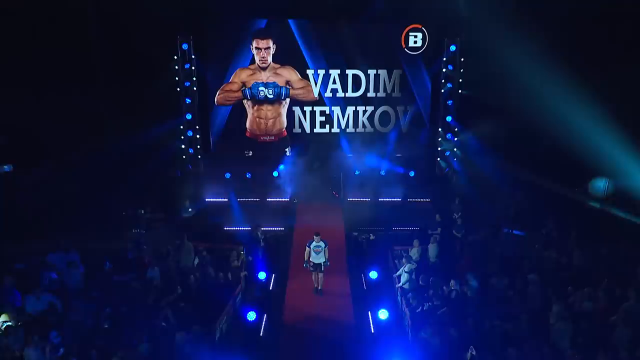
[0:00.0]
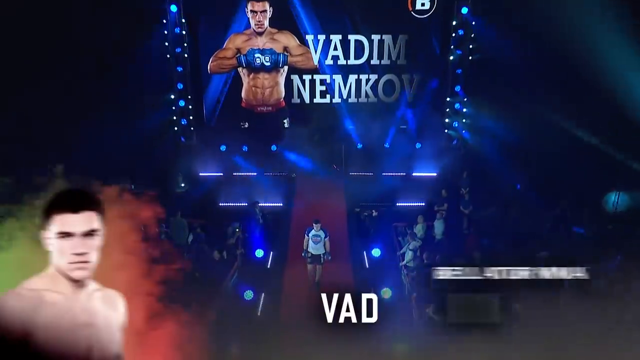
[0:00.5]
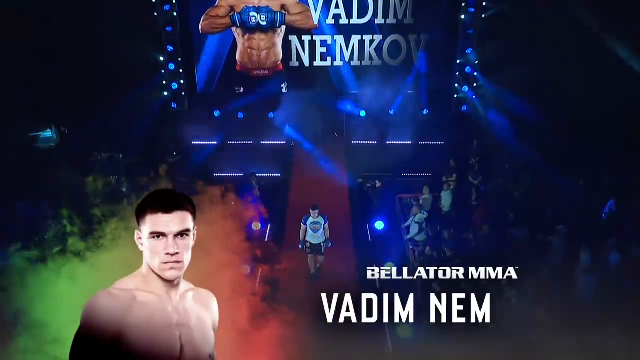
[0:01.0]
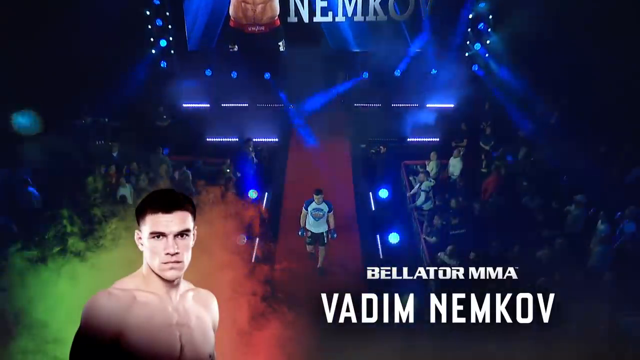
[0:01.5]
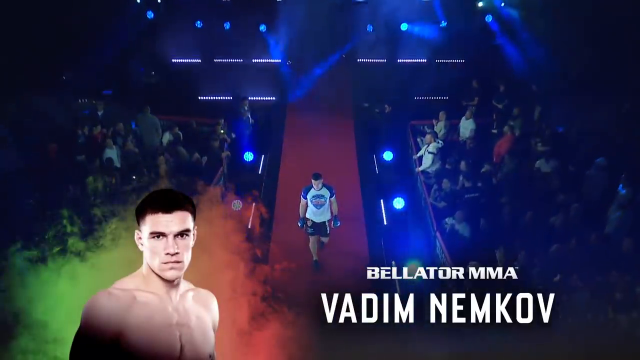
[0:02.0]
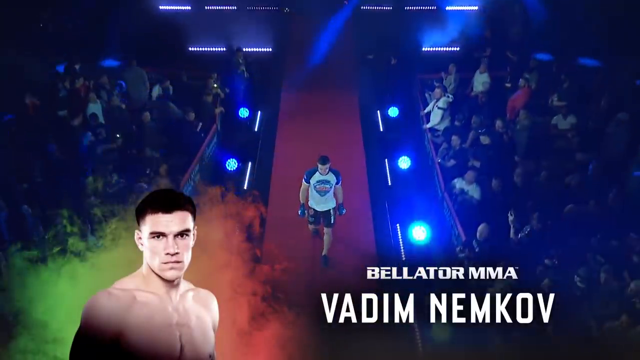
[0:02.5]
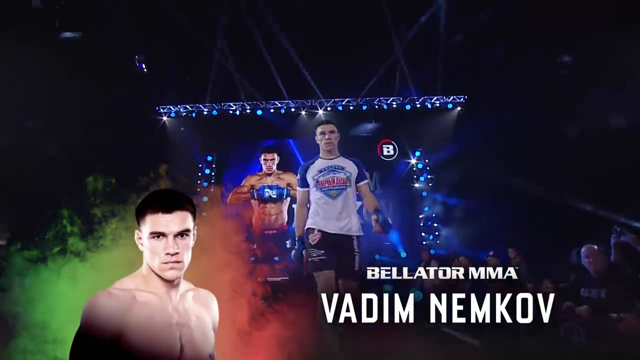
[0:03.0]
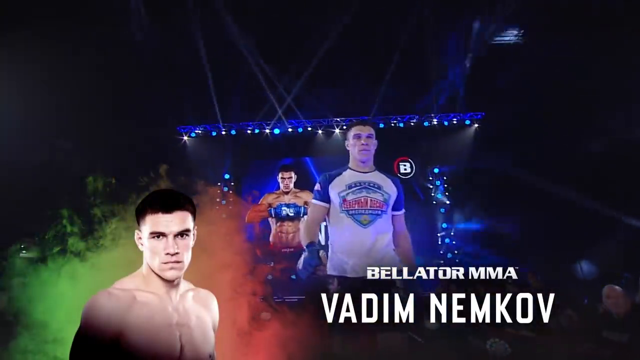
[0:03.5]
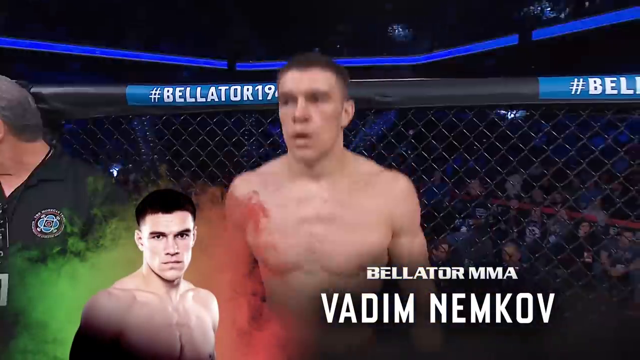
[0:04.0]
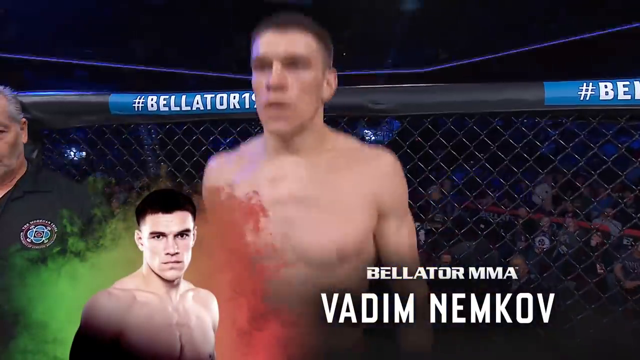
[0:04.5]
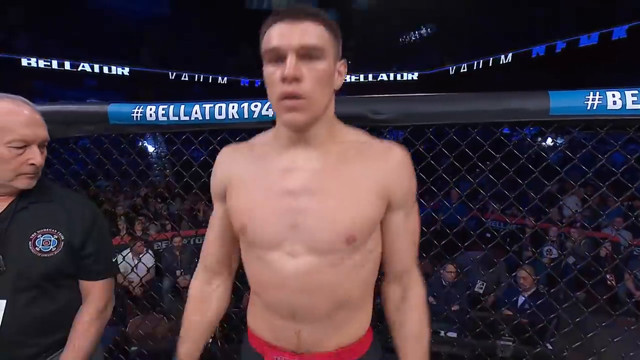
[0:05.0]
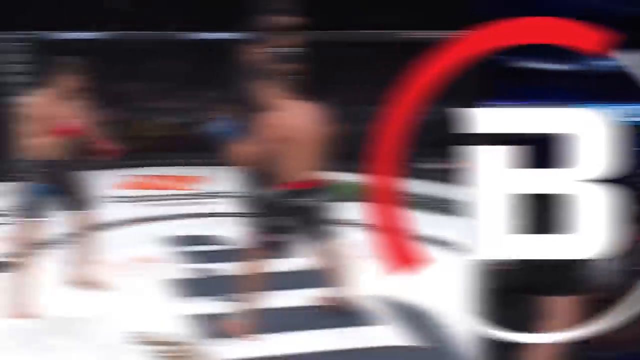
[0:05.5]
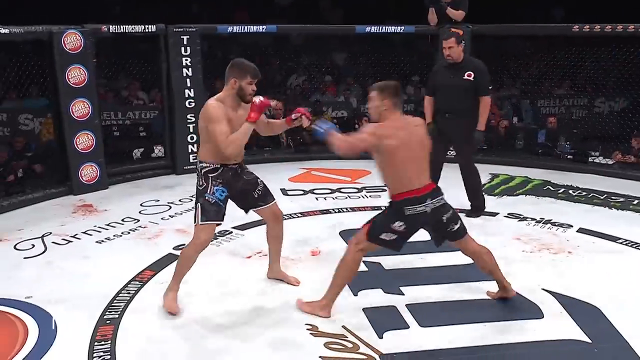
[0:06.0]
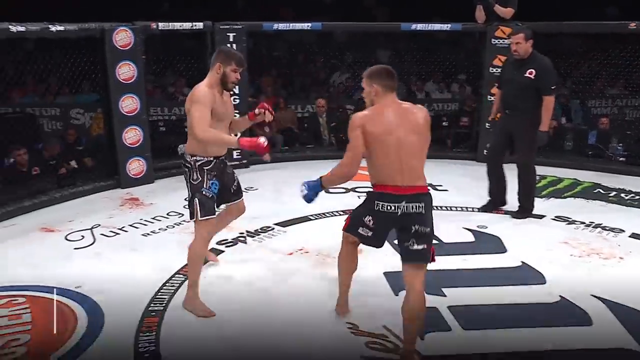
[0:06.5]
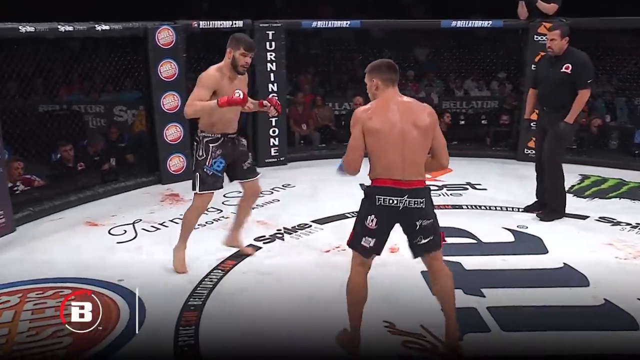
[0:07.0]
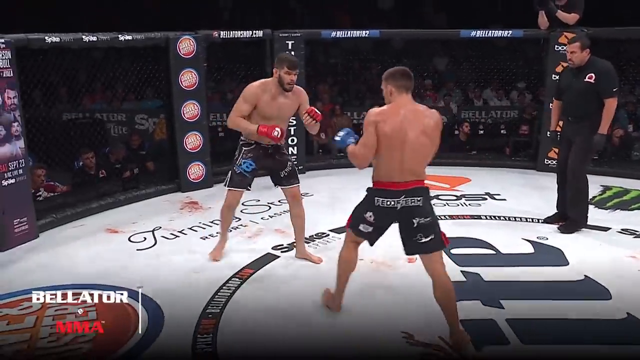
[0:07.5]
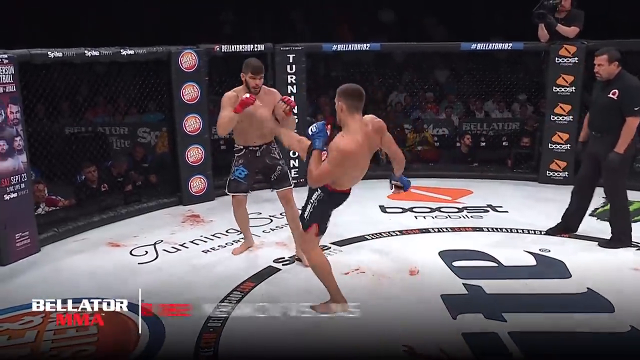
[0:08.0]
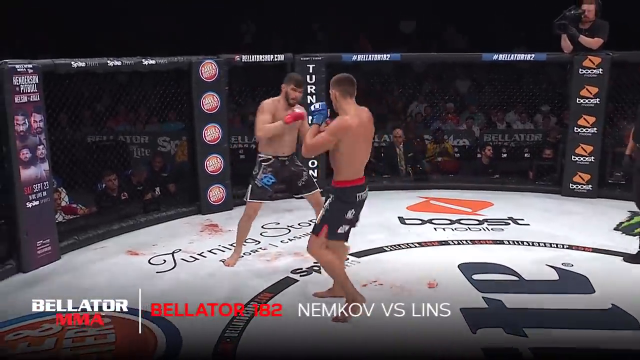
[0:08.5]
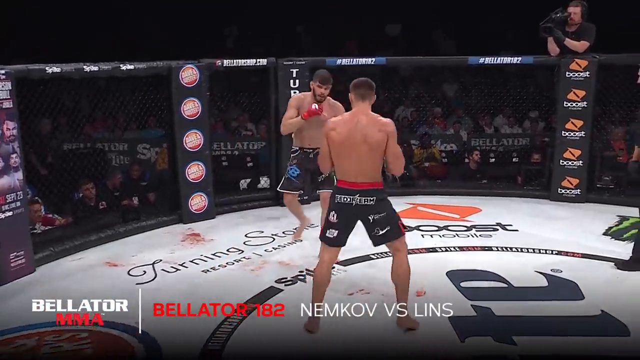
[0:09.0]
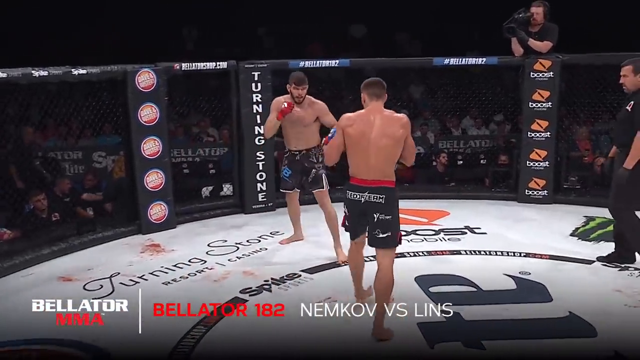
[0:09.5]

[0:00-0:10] The video opens with an introduction of Vadim Nepkov, a UFC fighter, and cuts to a short shot of him kicking at another man. A large crowd surrounds him as he enters, and he jumps up and down. The video then shows him in the octagon throwing a couple of kicks and swings at his opponent in a short clip. A referee in the ring wears black with a badge identifying him as a referee, and a cameraman hangs over the octagon with his camera pointed through. Several advertisements appear to be on the floor, including Boost and Bud Light. This opening sequence shows a man walking down to the ring for Bellator MMA, then moves to a scene of him fighting an opponent apparently named Linz. Text at the bottom reads "Nepkov vs. Linz."